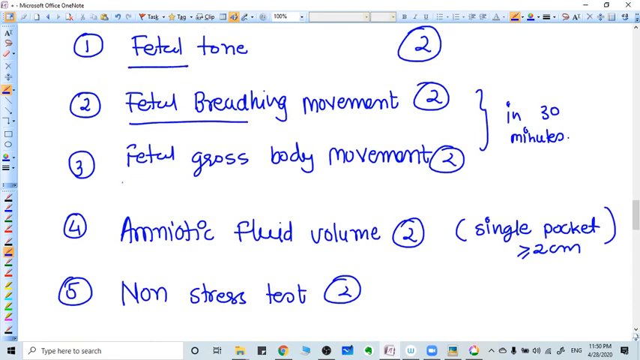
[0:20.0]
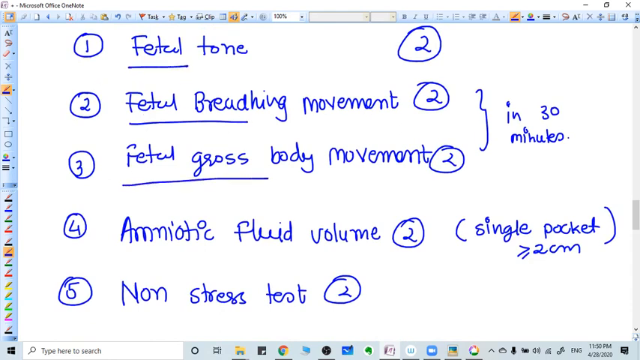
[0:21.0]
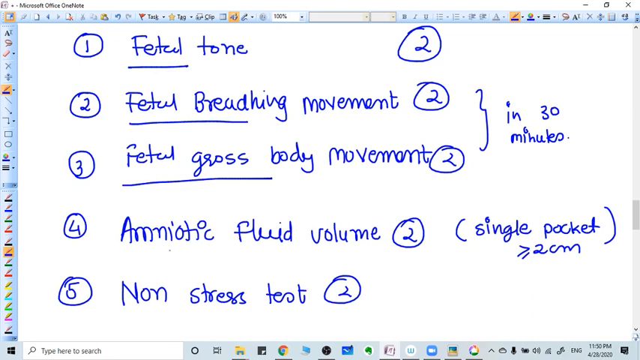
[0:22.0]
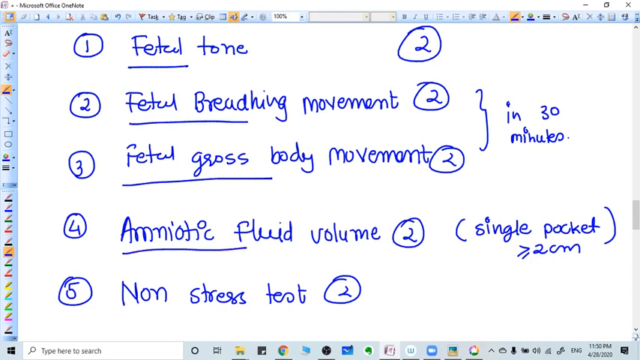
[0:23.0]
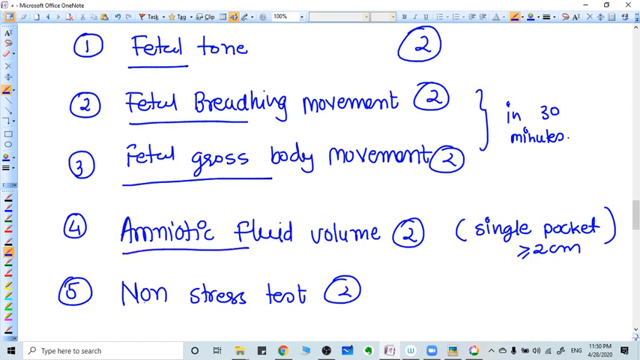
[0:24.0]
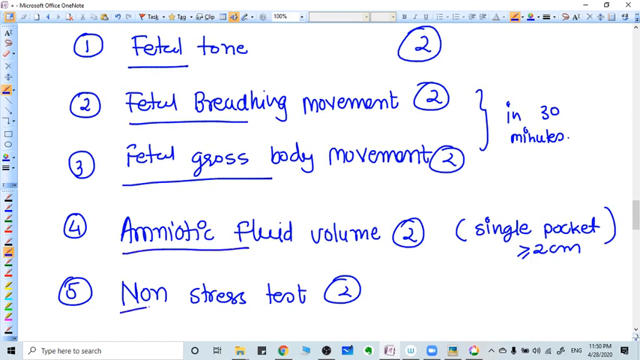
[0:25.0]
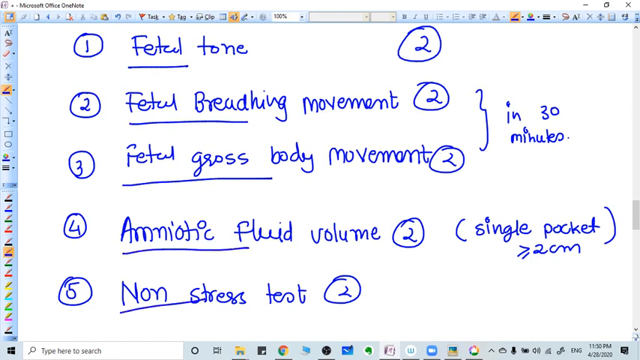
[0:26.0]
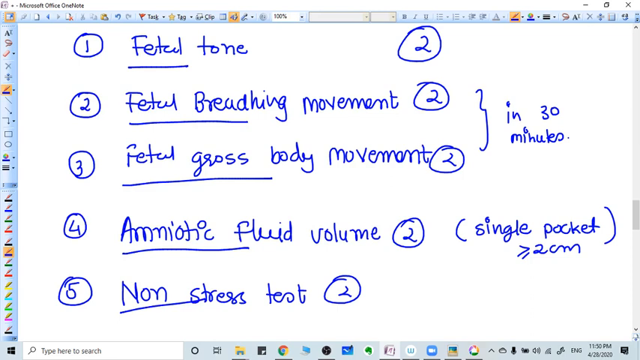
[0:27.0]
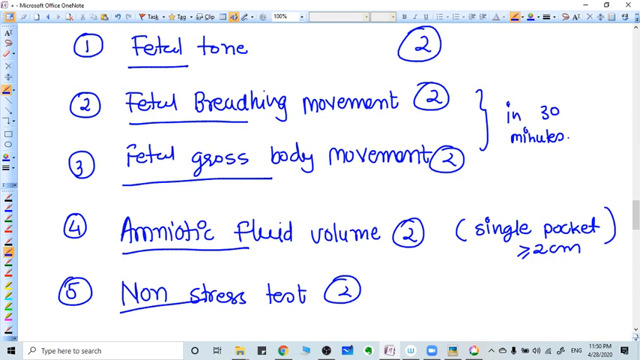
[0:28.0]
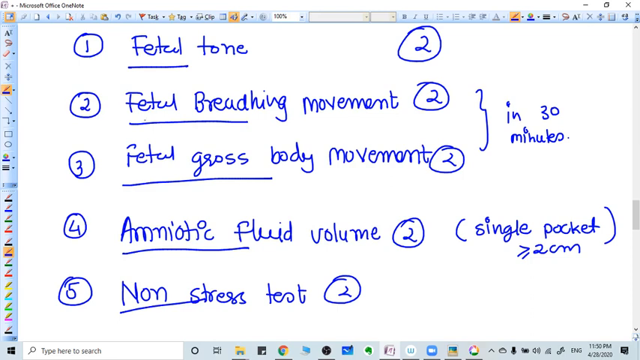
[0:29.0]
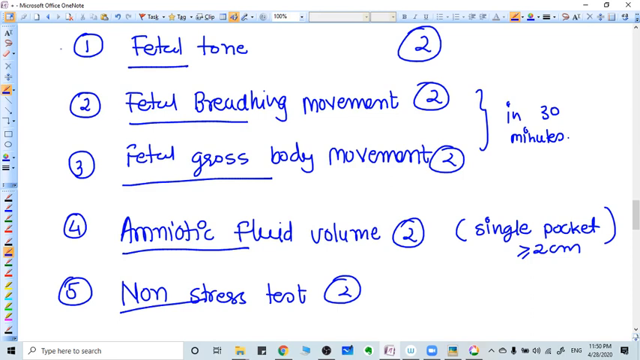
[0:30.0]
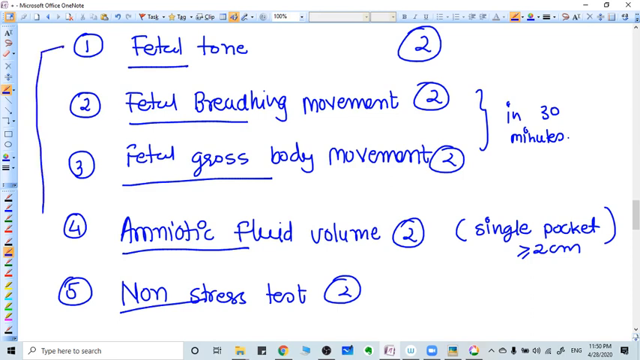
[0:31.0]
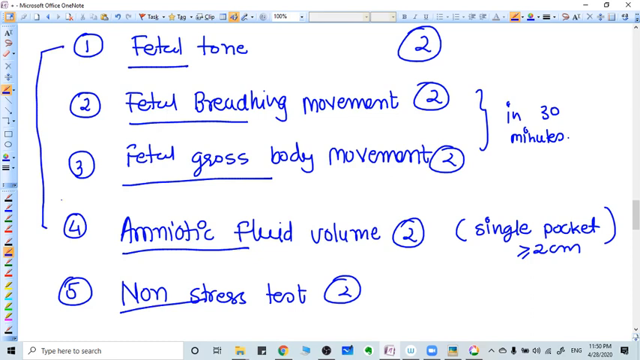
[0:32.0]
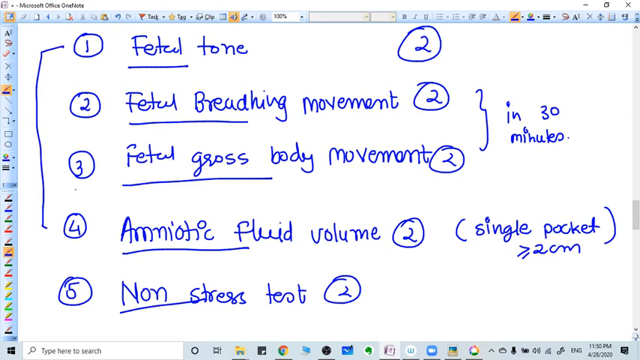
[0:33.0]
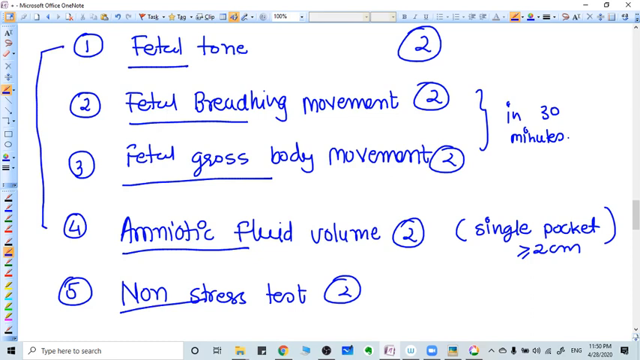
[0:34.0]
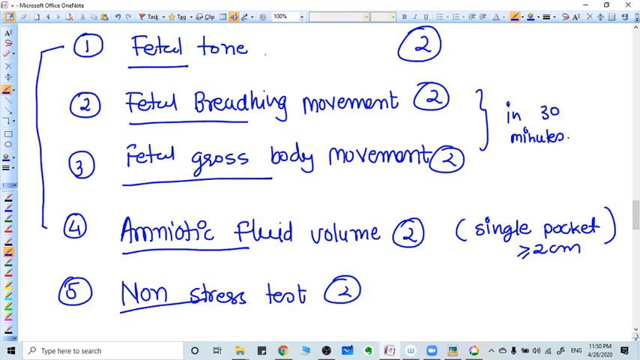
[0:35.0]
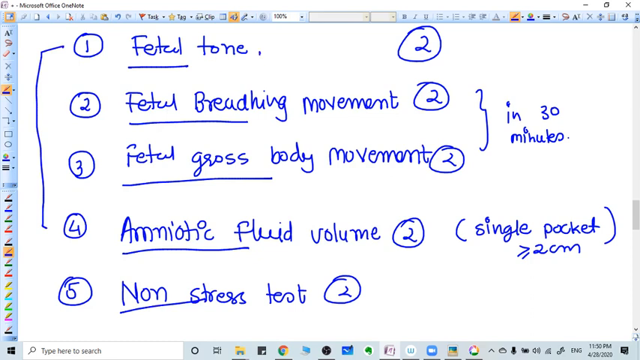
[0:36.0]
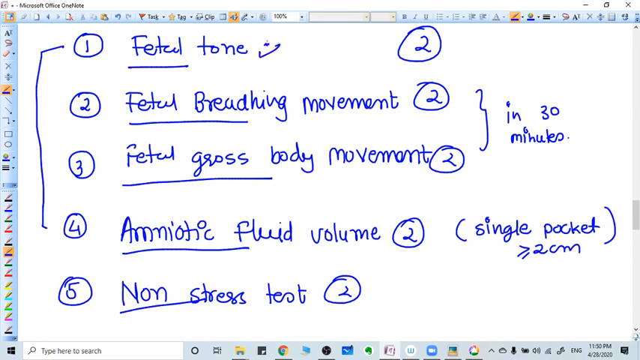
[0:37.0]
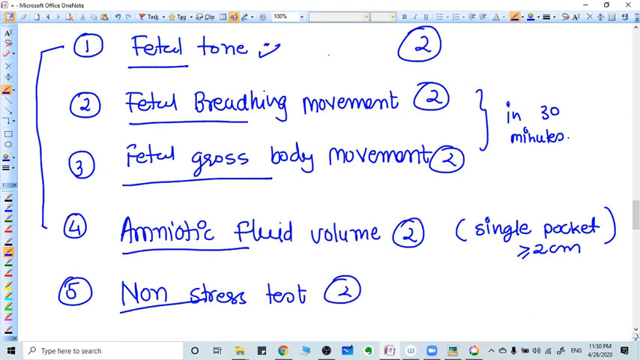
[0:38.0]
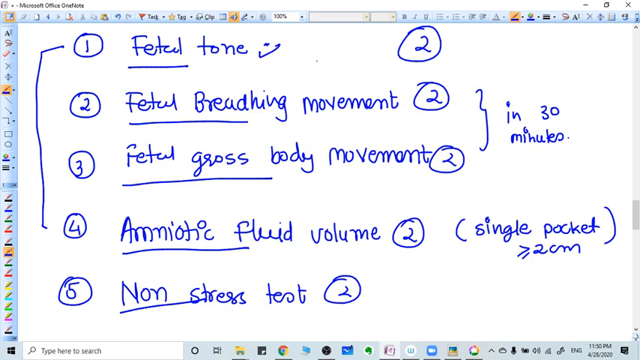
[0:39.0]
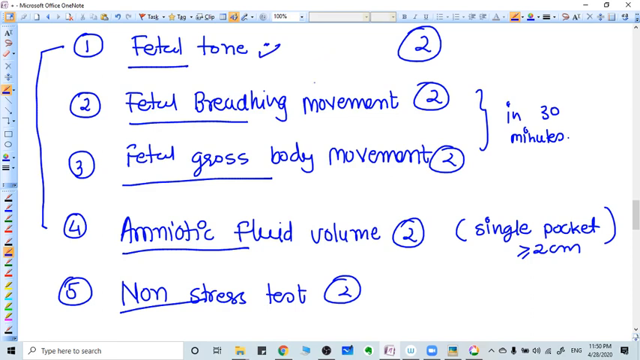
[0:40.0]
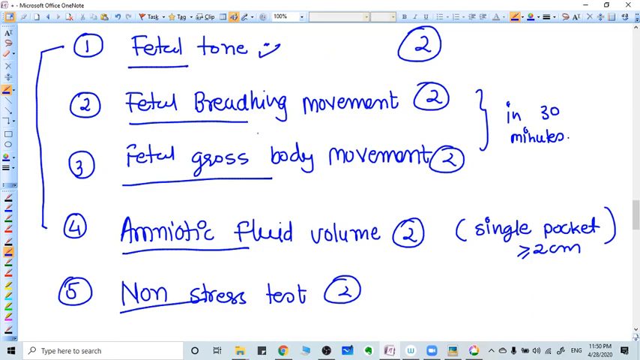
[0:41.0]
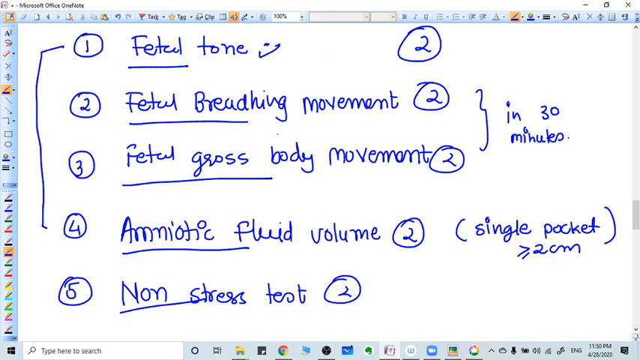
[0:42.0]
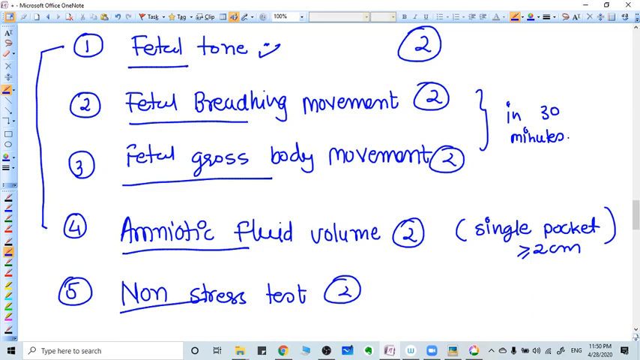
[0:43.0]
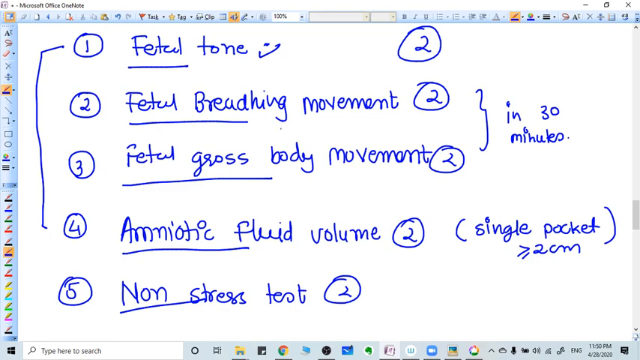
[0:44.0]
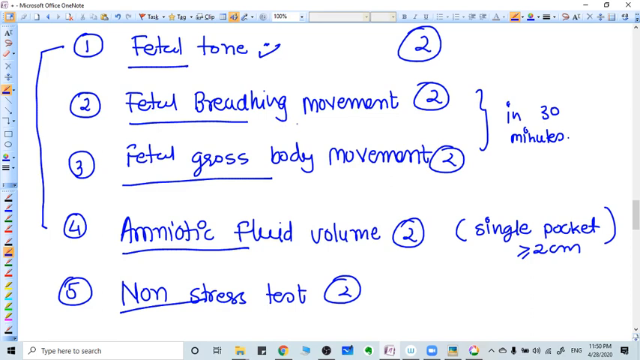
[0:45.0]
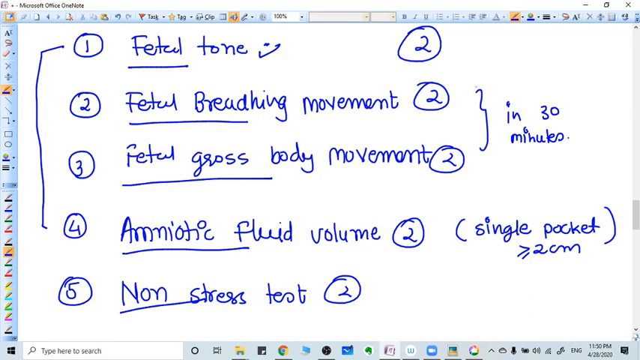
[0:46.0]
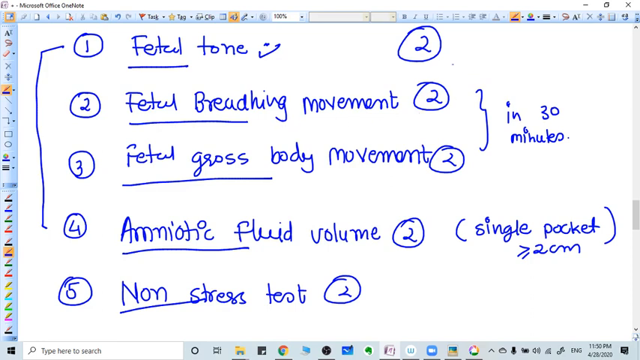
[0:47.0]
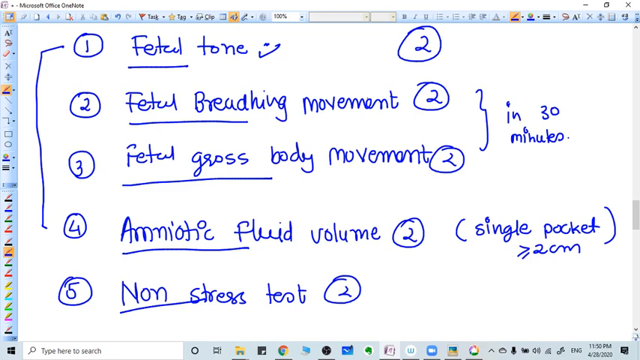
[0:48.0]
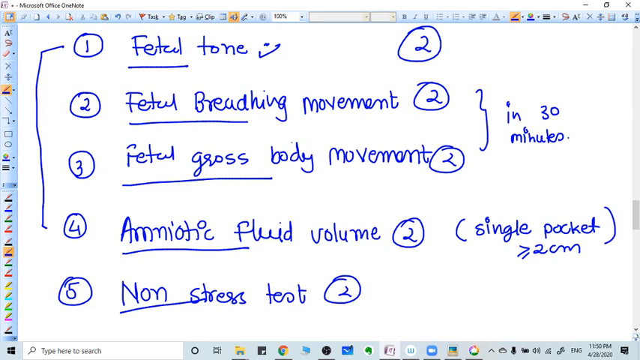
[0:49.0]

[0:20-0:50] The same Microsoft Office OneNote page is shown, with the notes written in blue and items one through five still visible. The person underlines different things. They put a smiley face next to "fetal tone" and draw a line connecting numbers one through four. The very small cursor moves around the page. They underline the words "fetal gross," "amniotic fluid" and "non-stress." Many icons are visible along the top, bottom and left side of the screen. In the bottom right corner of the computer it says "11:50 PM" and "4/28/2020." Apart from the writing on the notes, very little changes. The background of the computer screen is white with light gray.